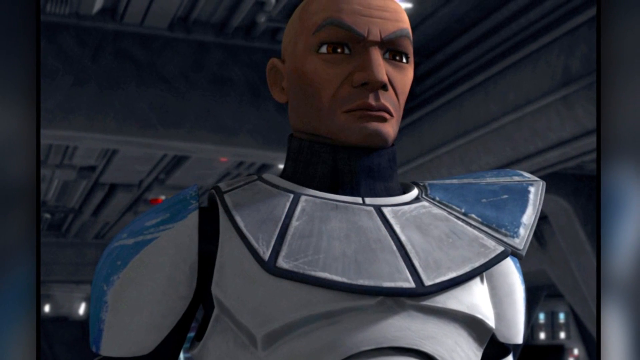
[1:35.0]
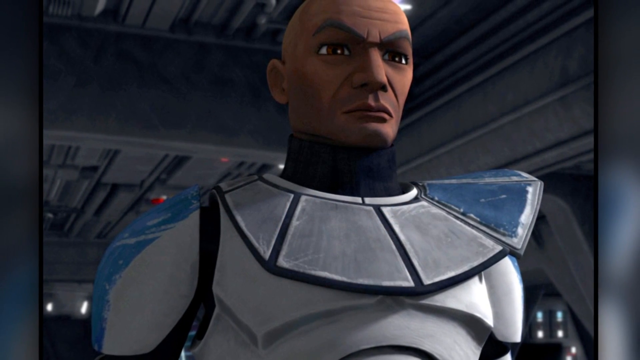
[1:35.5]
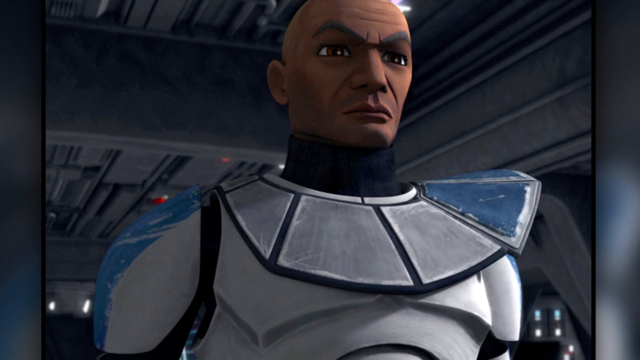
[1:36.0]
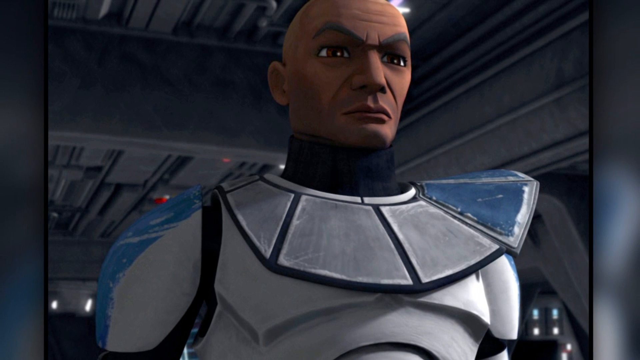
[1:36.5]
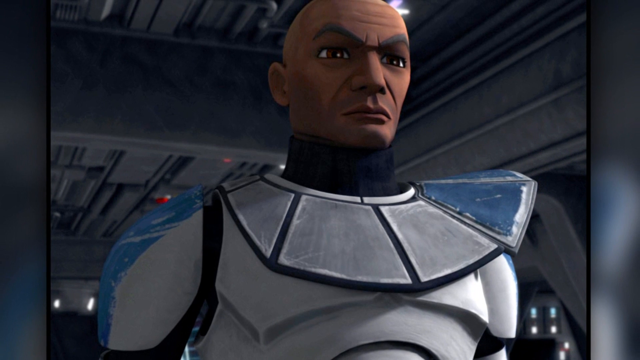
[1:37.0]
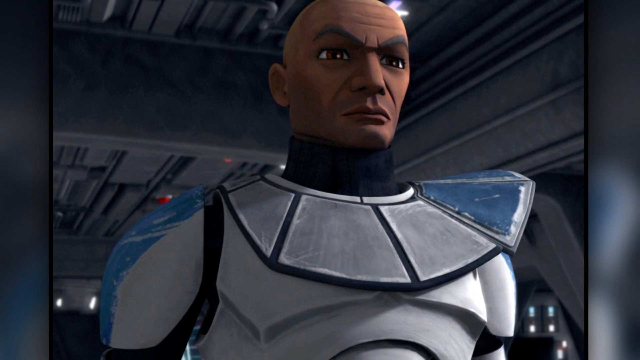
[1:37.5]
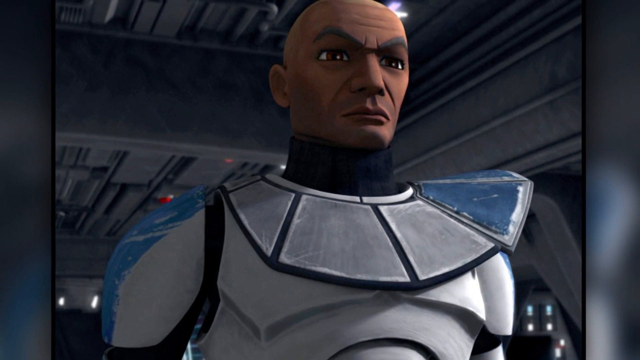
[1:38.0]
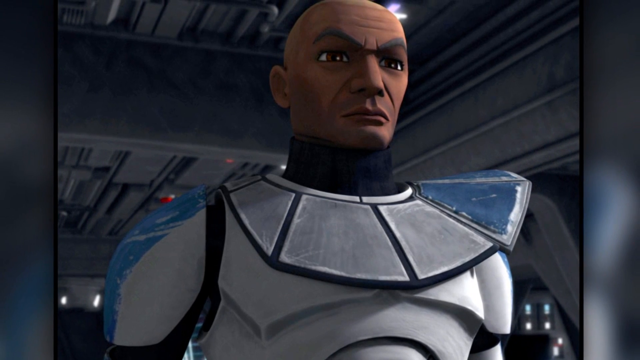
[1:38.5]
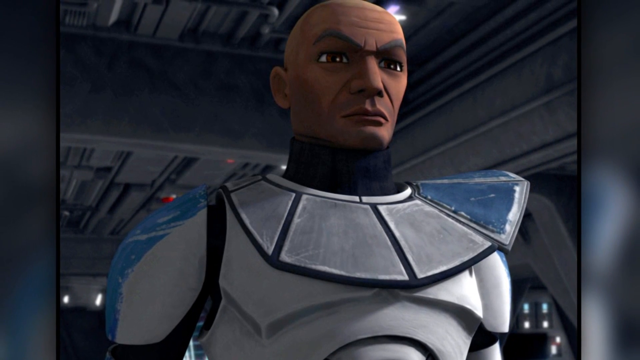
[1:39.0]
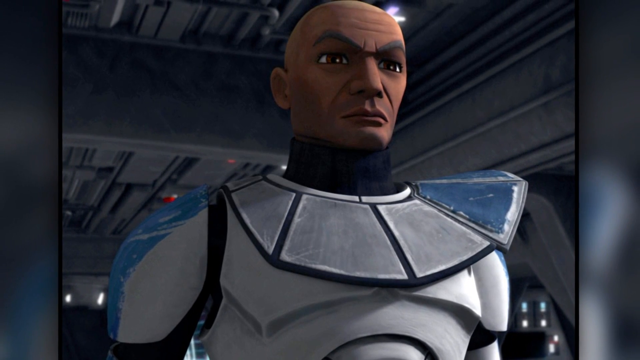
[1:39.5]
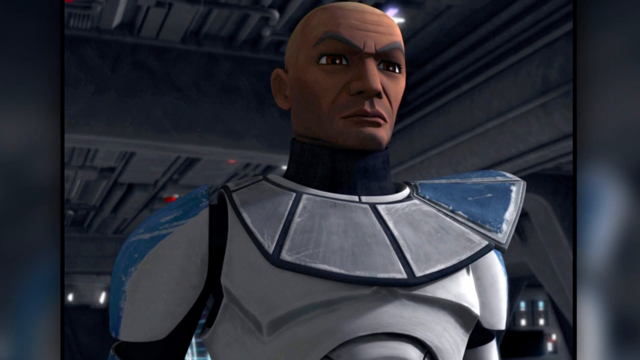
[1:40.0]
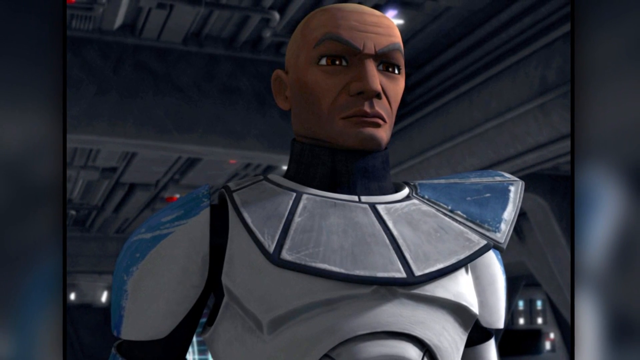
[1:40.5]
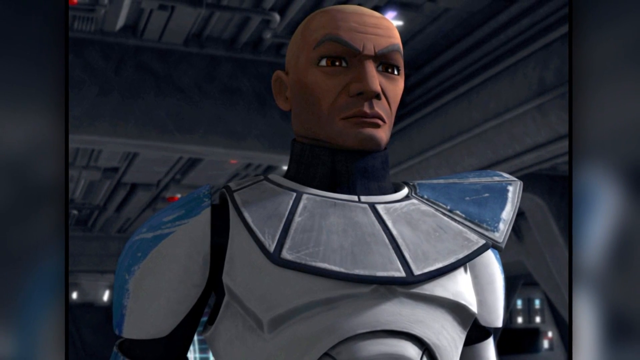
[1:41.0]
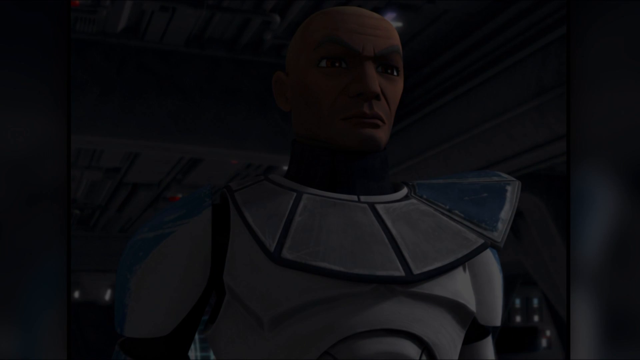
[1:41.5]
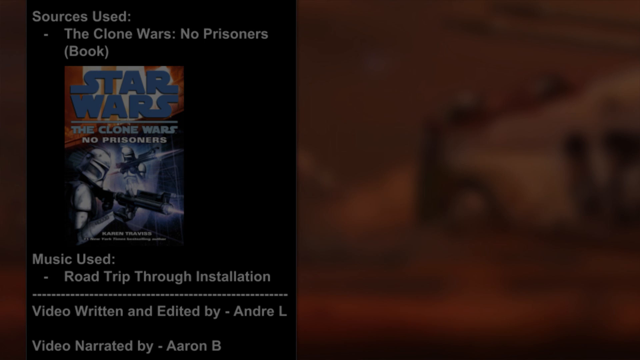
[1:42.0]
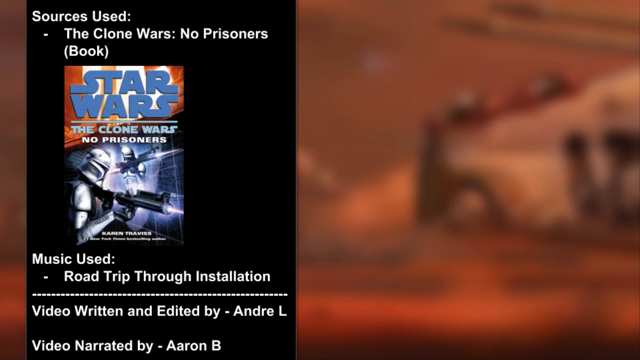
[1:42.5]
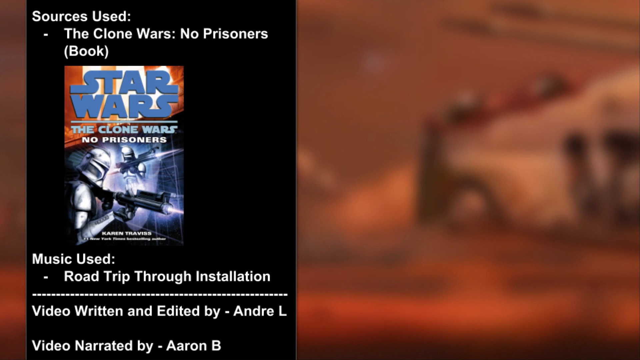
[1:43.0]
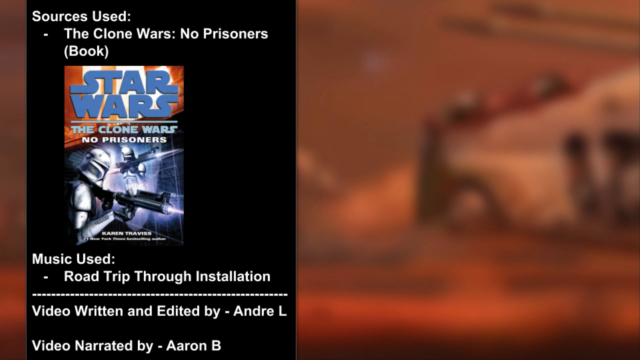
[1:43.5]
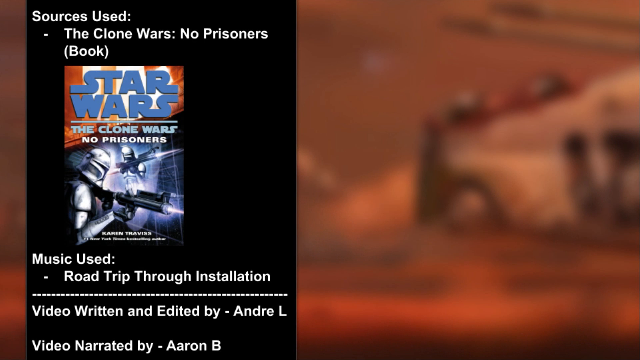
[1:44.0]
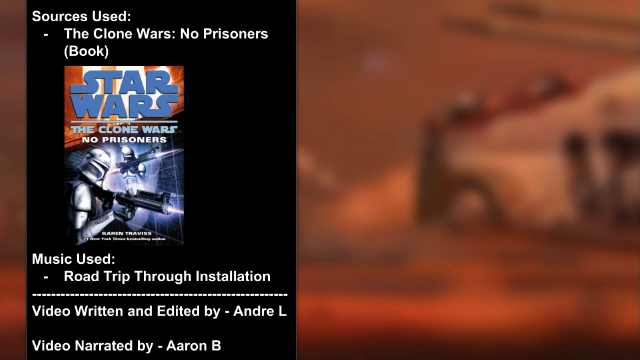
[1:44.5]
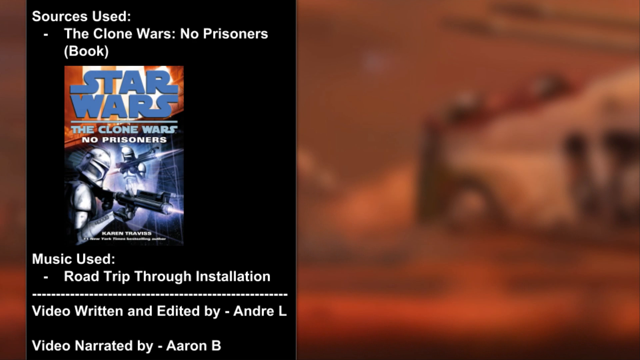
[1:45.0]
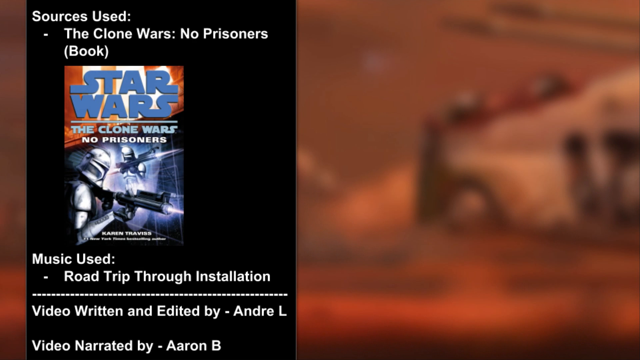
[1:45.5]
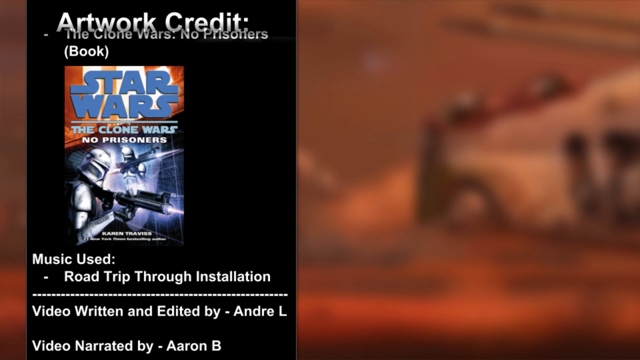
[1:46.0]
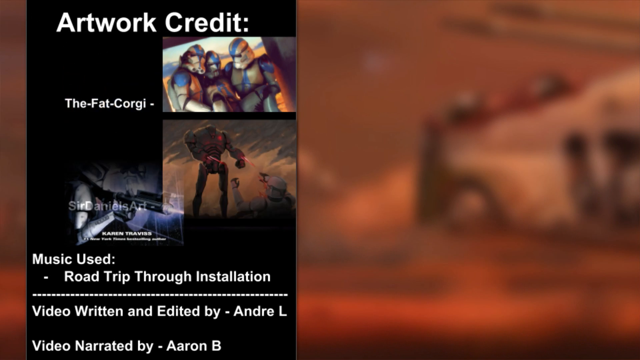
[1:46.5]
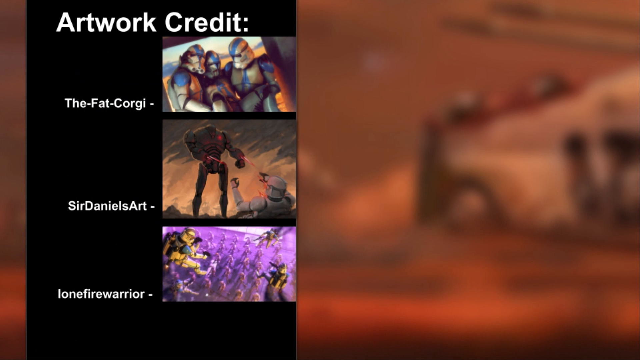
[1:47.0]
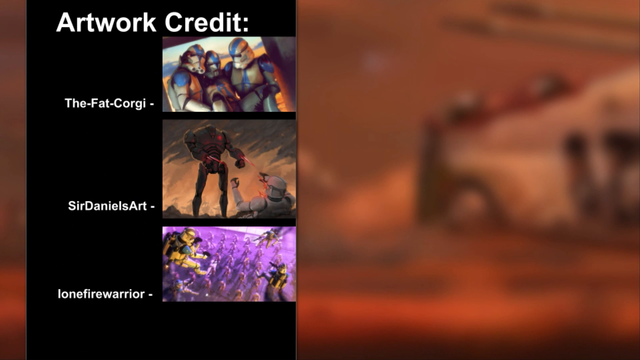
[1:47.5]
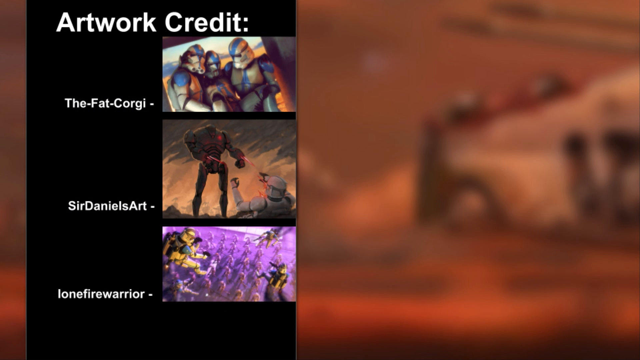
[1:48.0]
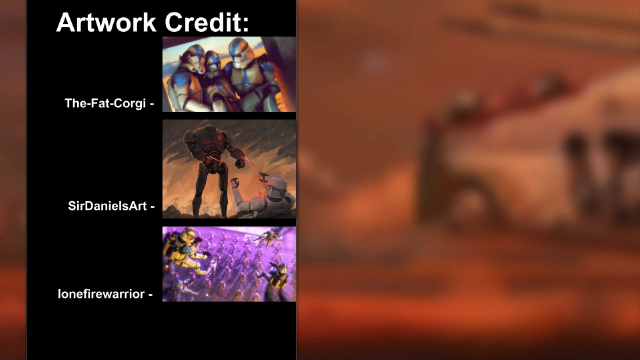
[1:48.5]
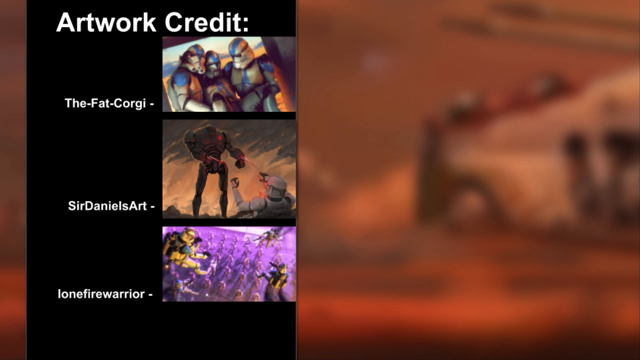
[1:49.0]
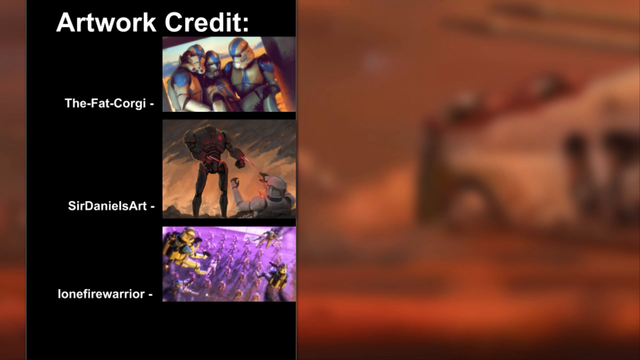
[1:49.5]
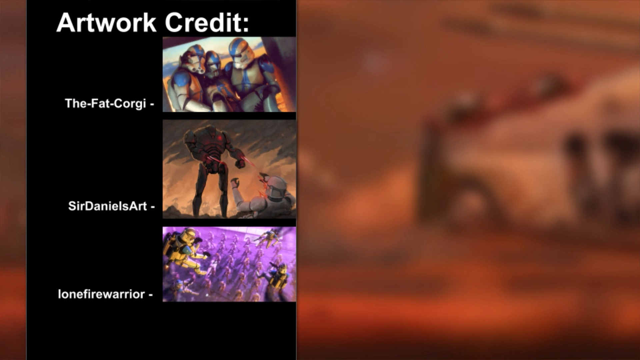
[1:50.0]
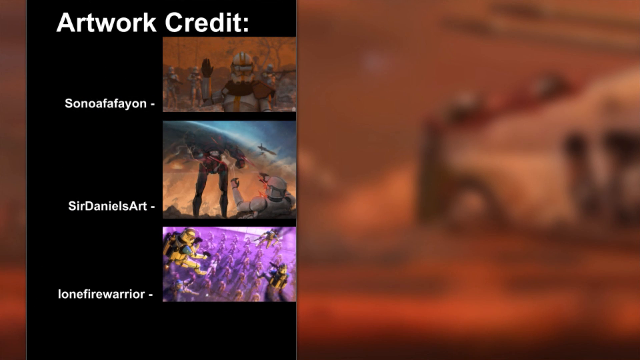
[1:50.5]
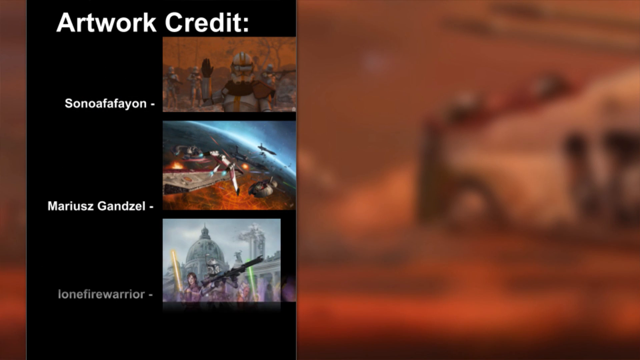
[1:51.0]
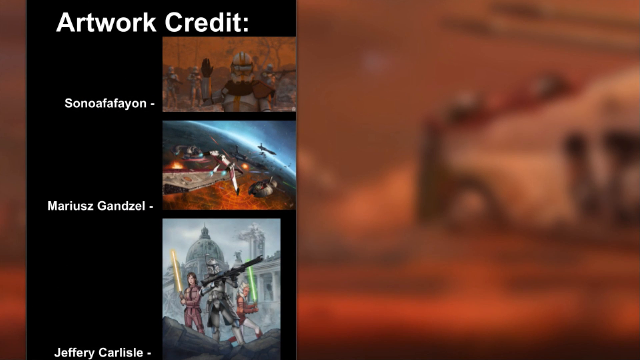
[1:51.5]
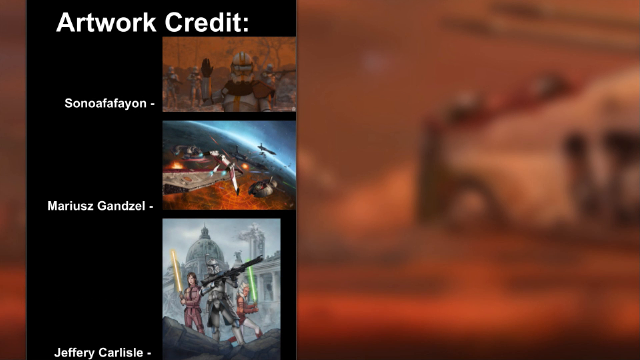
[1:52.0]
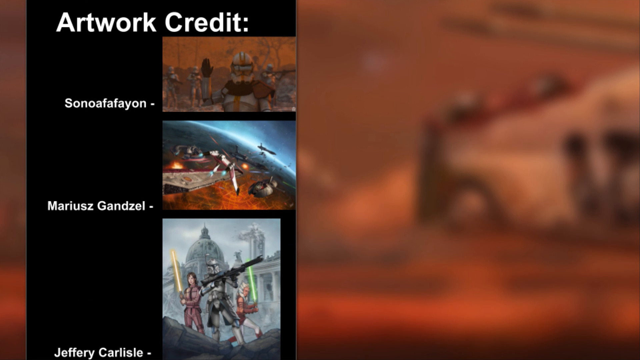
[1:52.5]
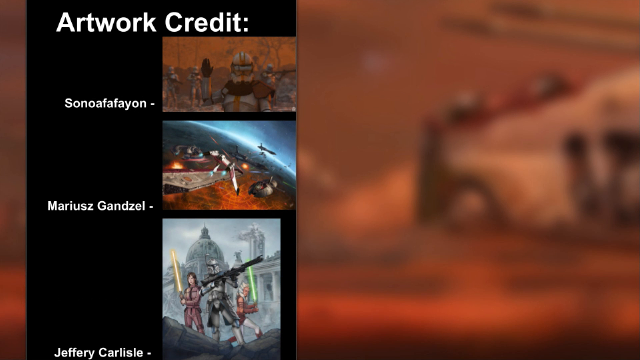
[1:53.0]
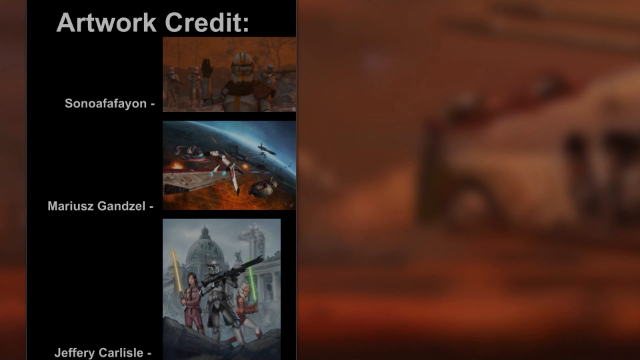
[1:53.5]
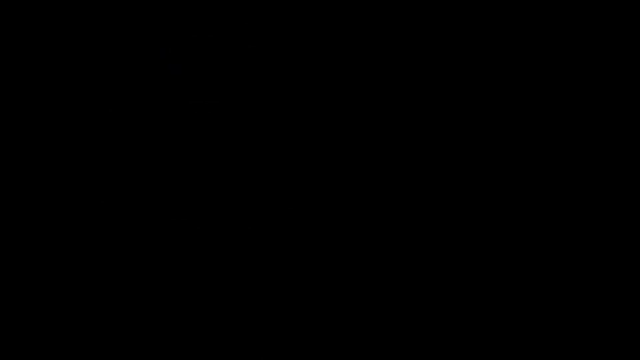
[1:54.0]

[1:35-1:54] The same shot of the African American man continues, framed horizontally from his head to his chest. He looks to be in a spaceship of some sort, with a red button behind him. Then "Patreon" appears along with artwork credits for The Fat Corgi, SirDanielsArt, lonefirewarrior and Mariusz Gandzel, among others, showing the artwork associated with each artist. The Lore Master watermark is now in the top left. "Star Wars The Clone Wars No Prisoners" is shown, apparently by Karen Travis, New York Times Best-Selling Author. Text then reads "music used: Road Trip Through Installation" and "Video written and edited by Andre L."